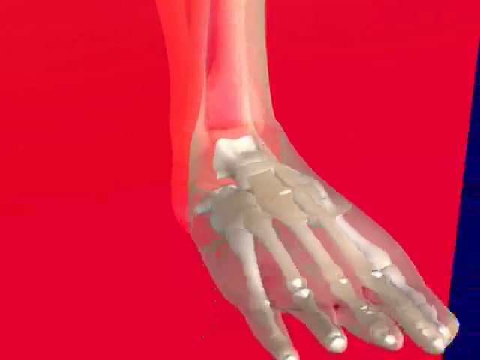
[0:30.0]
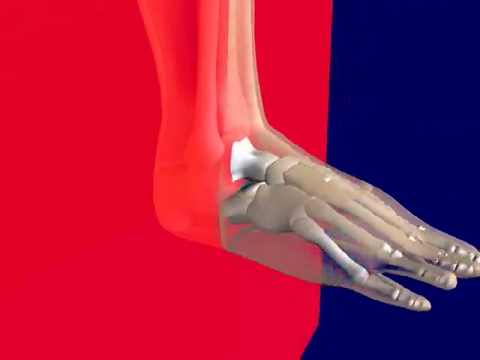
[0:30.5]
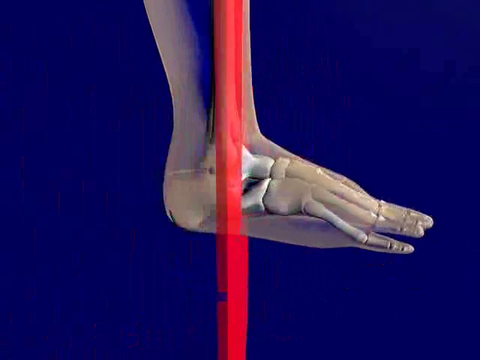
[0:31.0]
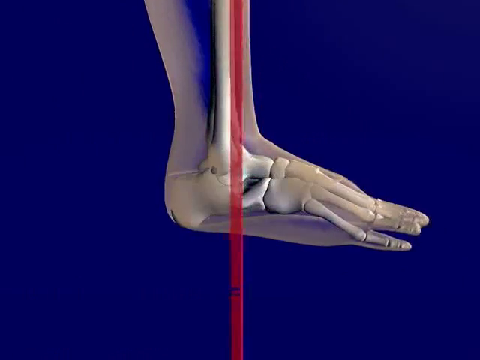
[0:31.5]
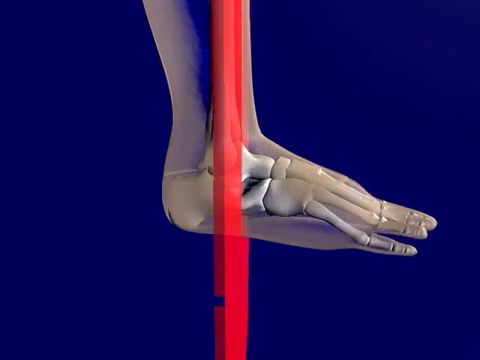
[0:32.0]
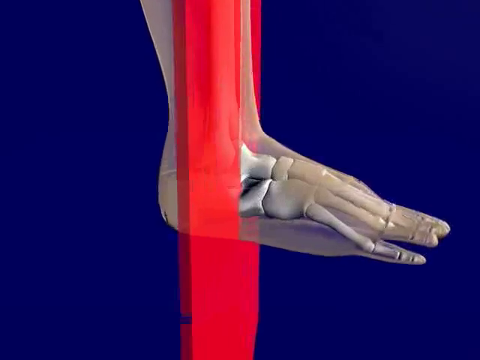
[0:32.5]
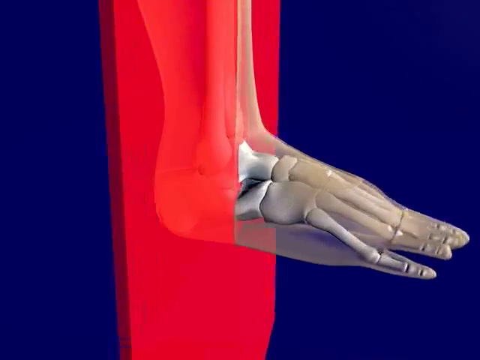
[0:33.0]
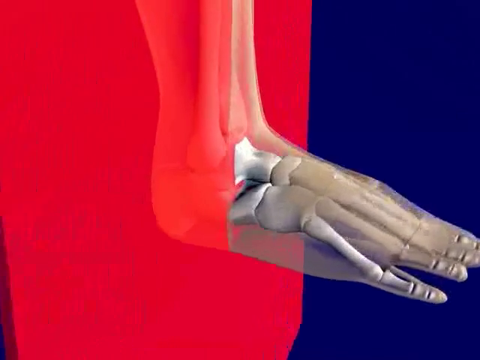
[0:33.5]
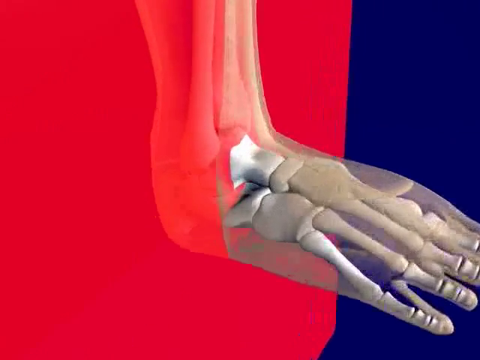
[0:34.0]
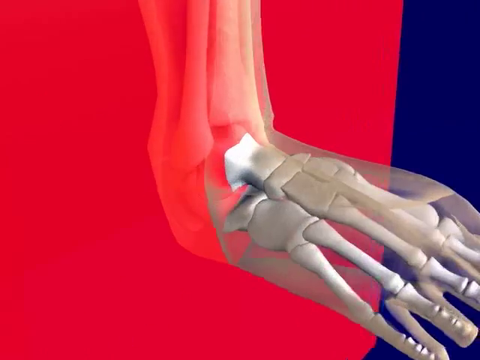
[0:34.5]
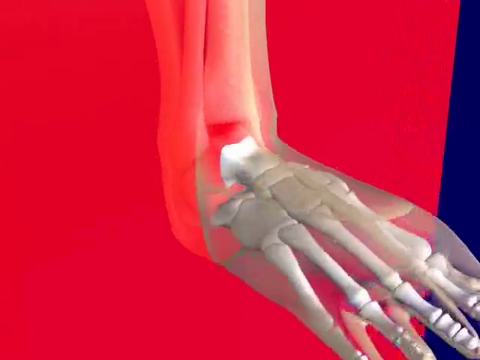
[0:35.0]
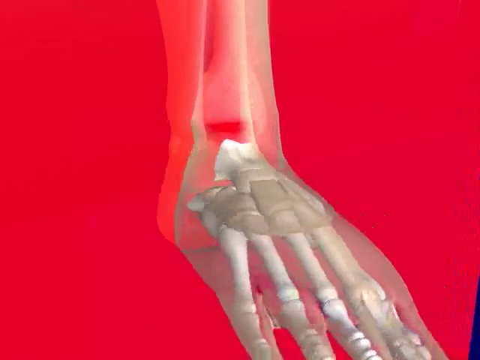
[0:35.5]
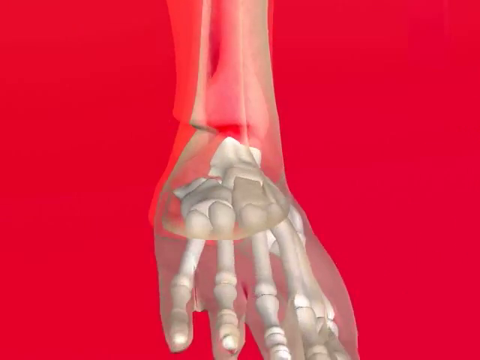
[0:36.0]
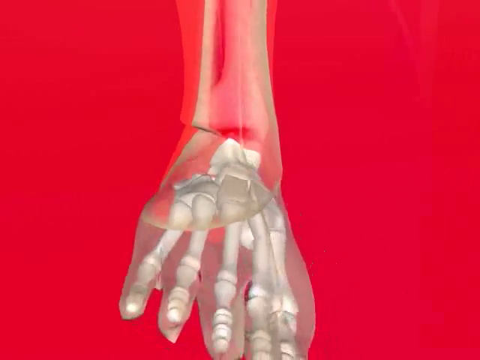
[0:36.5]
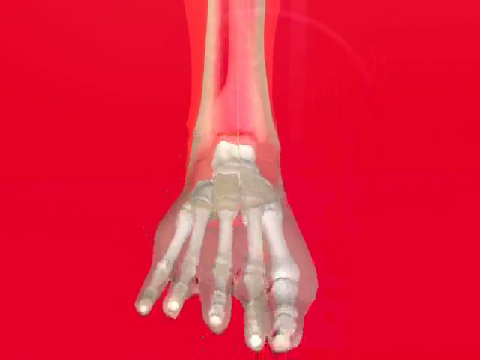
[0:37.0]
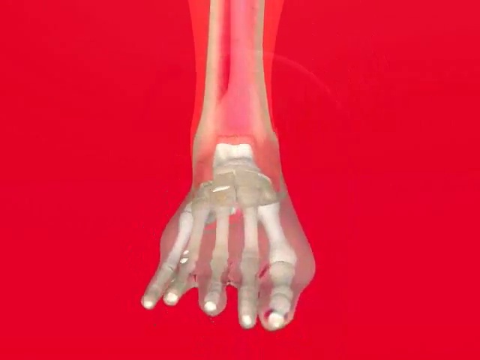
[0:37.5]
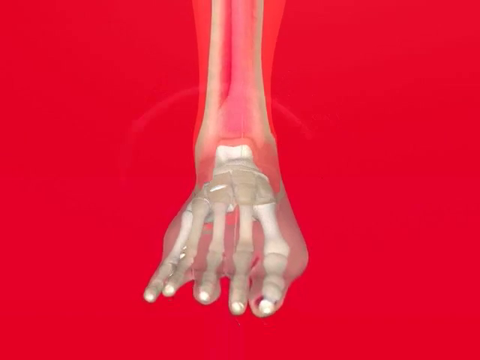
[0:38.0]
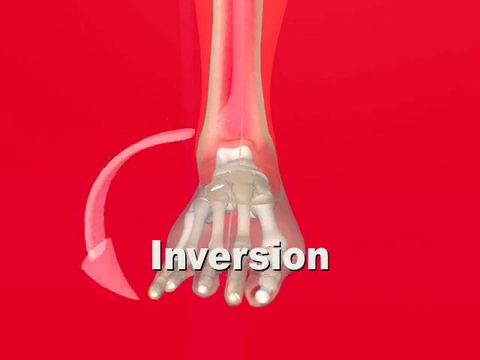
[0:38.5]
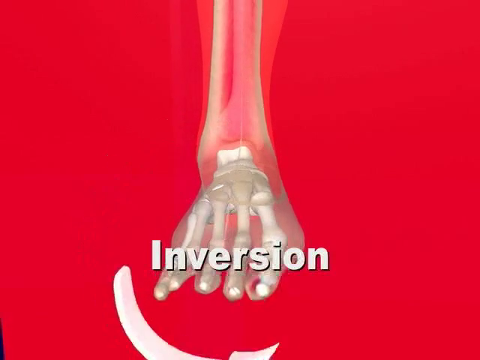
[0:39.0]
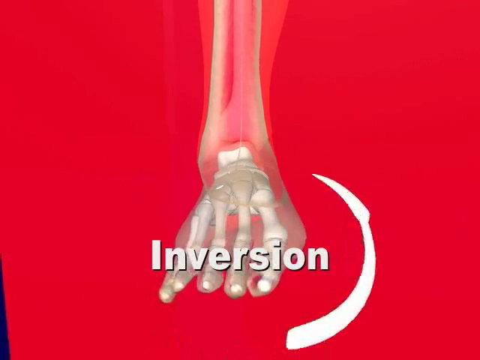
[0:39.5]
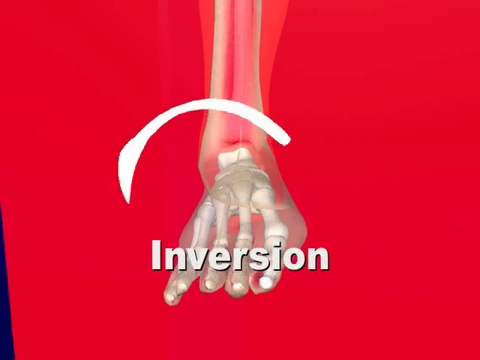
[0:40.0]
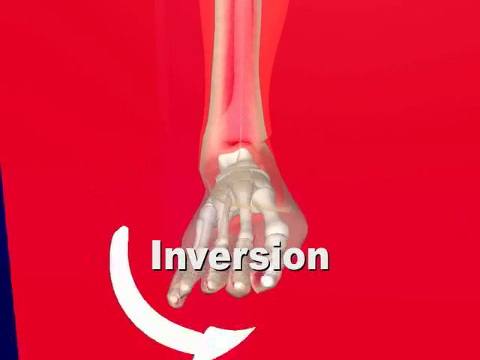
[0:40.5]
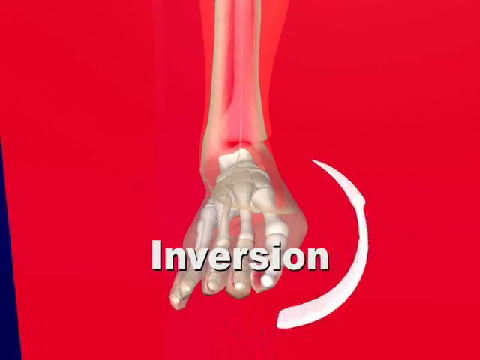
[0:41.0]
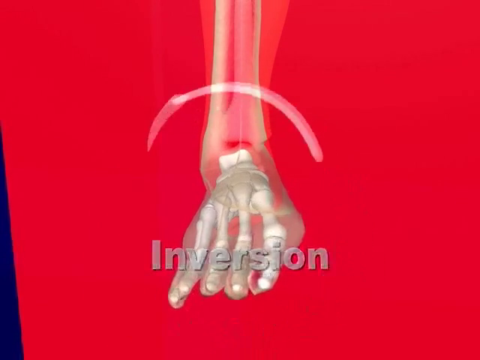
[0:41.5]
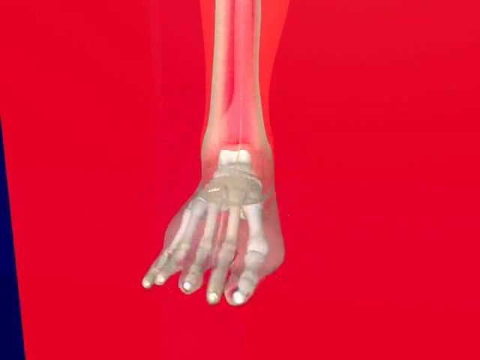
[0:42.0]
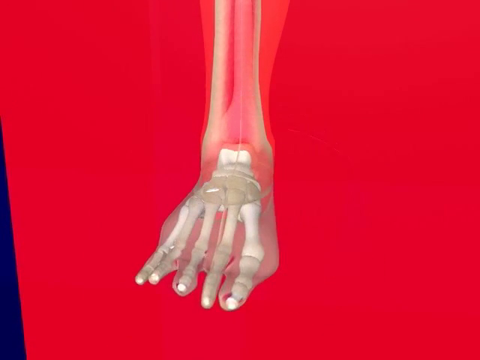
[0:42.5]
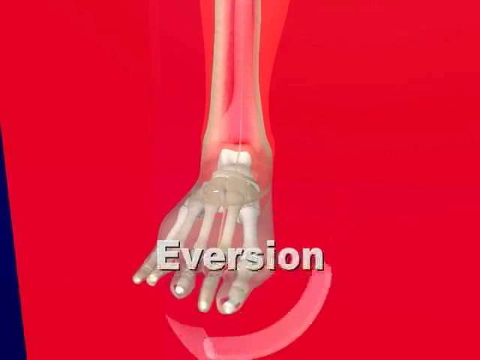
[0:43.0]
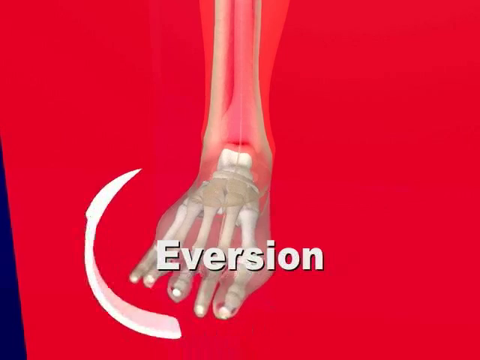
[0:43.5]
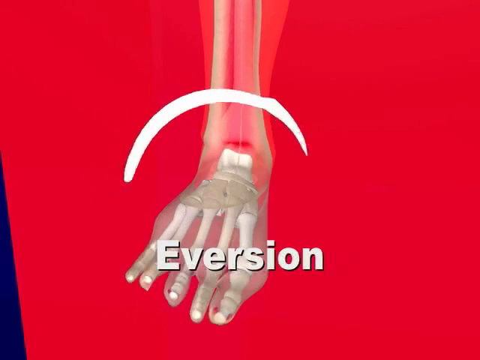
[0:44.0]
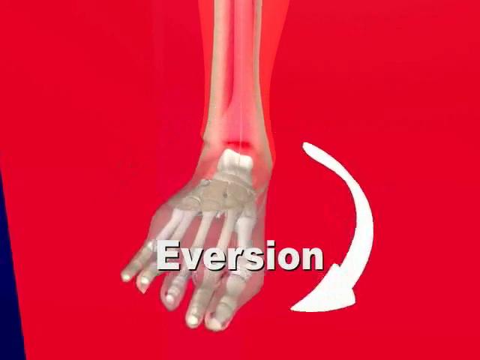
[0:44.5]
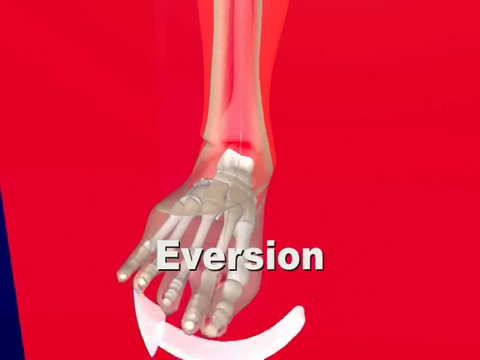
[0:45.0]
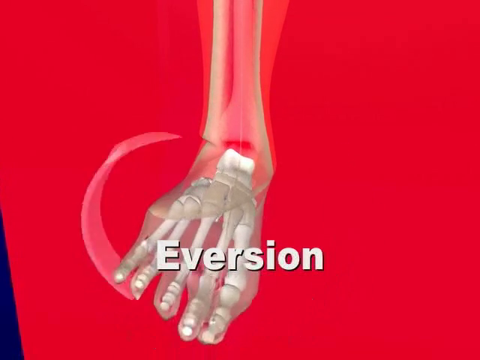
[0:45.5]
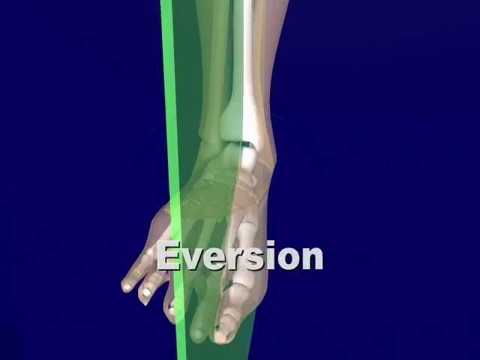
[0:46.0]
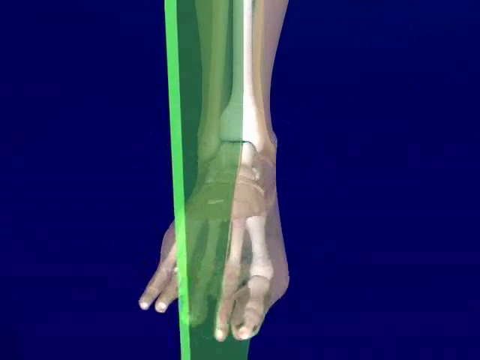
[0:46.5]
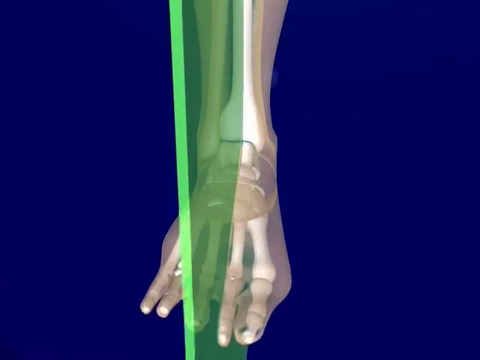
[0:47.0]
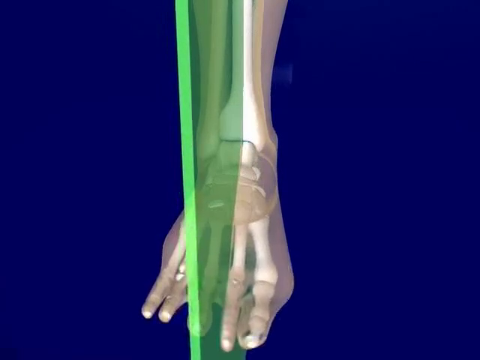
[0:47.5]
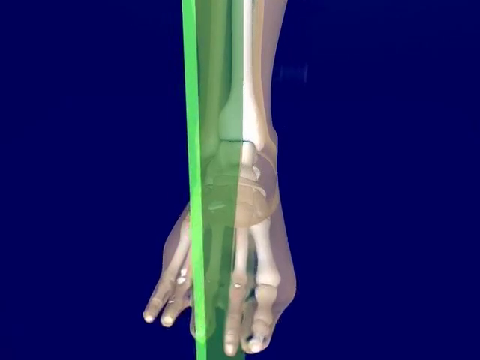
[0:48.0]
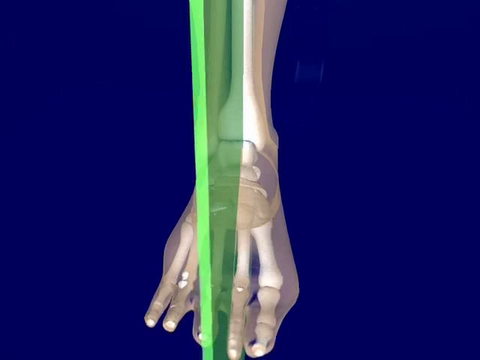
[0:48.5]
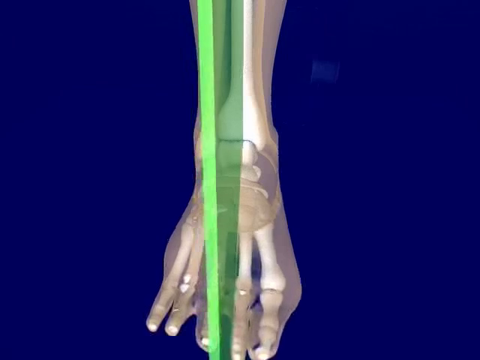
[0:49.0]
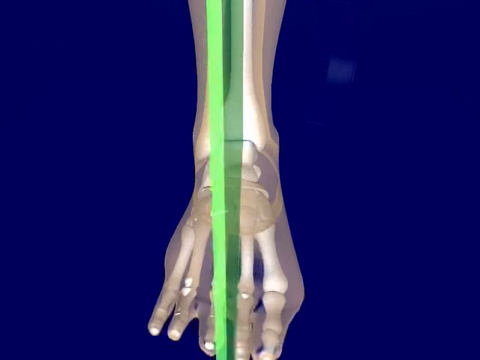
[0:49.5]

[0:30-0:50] The foot is shown from the side, revealing the heel, which makes it clear that it is a human foot. The toes are essentially the same length, and the leg is clear, so the inside can be seen. The word "inversion" comes onto the screen, and a white arrow goes up and around counterclockwise. Then "eversion" is on the screen, and the thick white arrow goes clockwise around the foot. The foot, previously on a red background, is now on a dark background. A lime green divider splits the foot right between the middle of the toes. The red background spins, moving behind it to show the heel and the back of the foot as they would look in an x-ray; only the bones are visible, not the heel as it looks to the human eye.